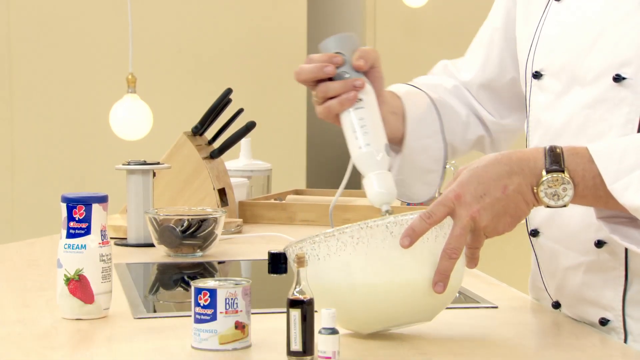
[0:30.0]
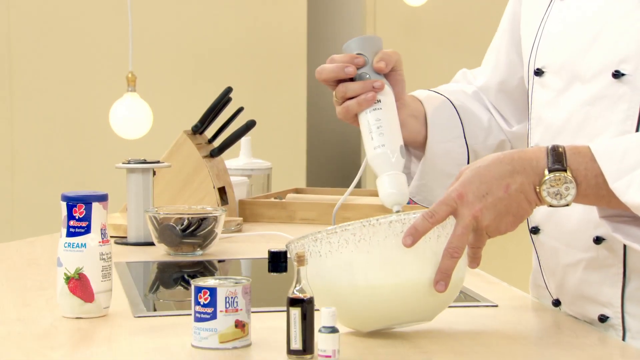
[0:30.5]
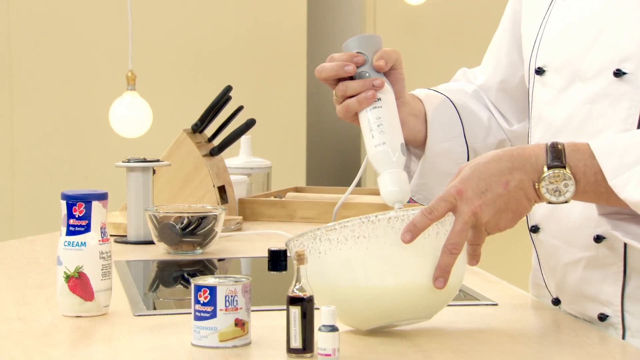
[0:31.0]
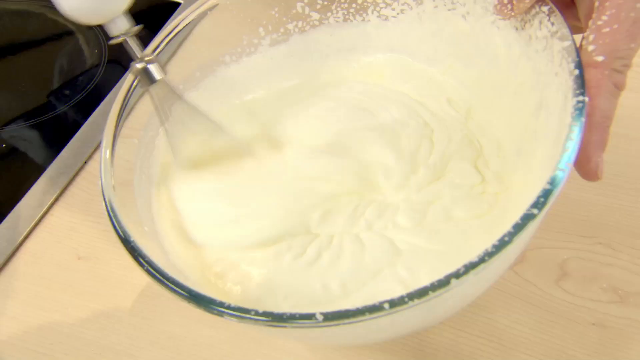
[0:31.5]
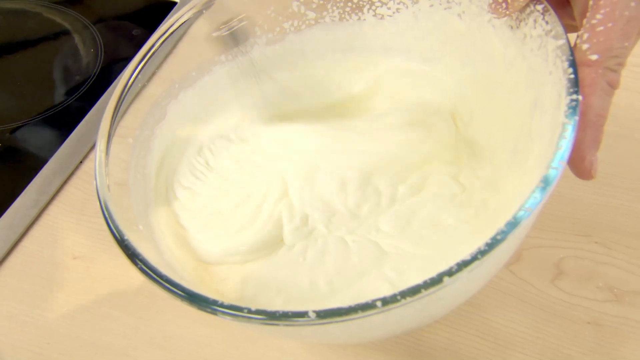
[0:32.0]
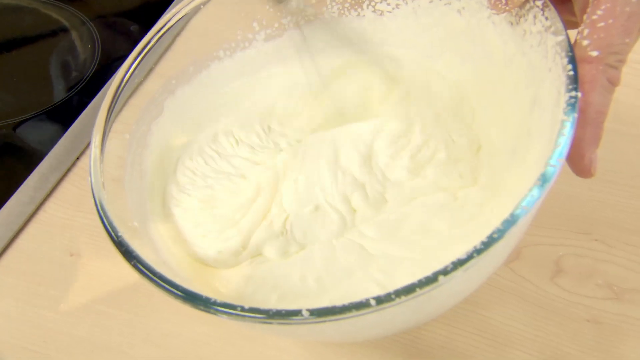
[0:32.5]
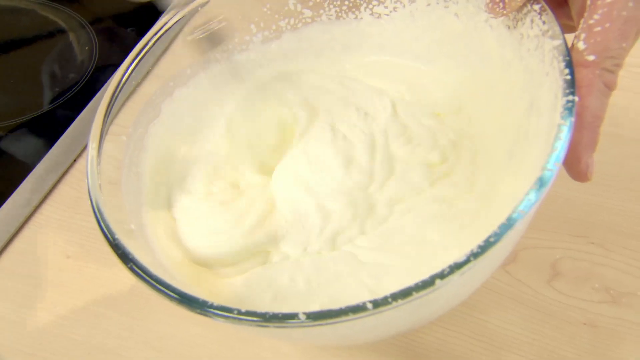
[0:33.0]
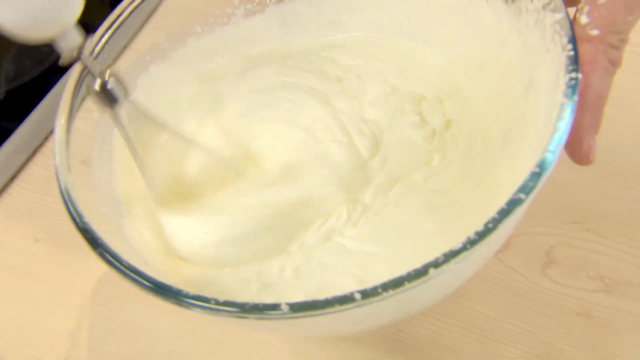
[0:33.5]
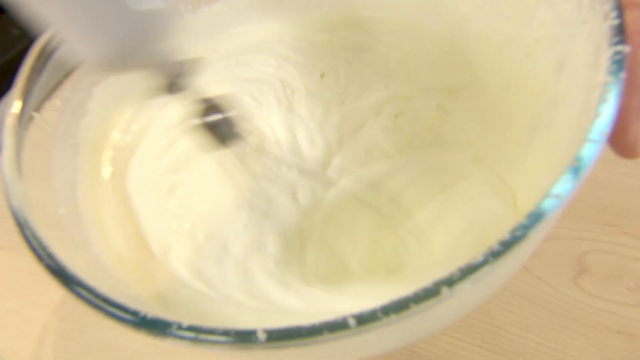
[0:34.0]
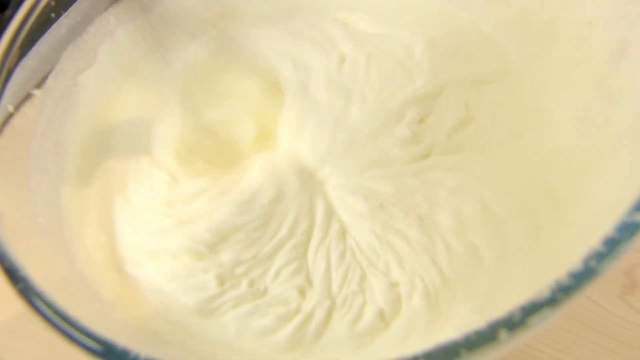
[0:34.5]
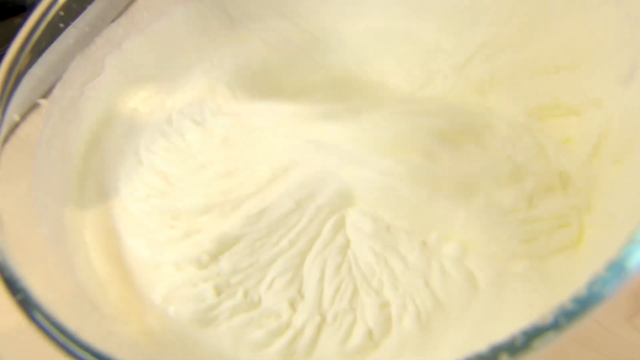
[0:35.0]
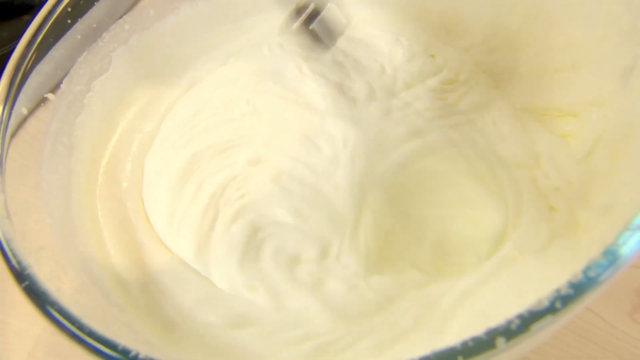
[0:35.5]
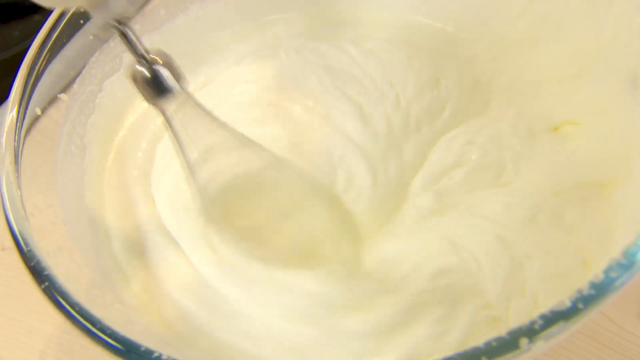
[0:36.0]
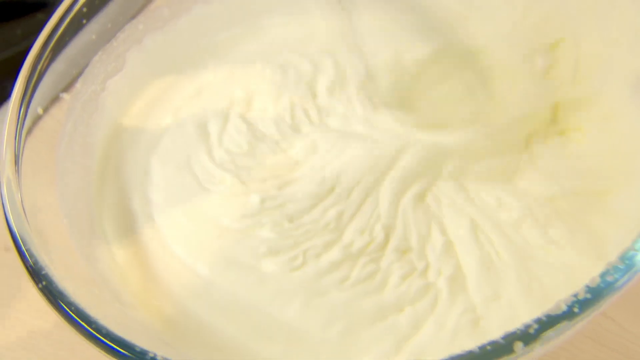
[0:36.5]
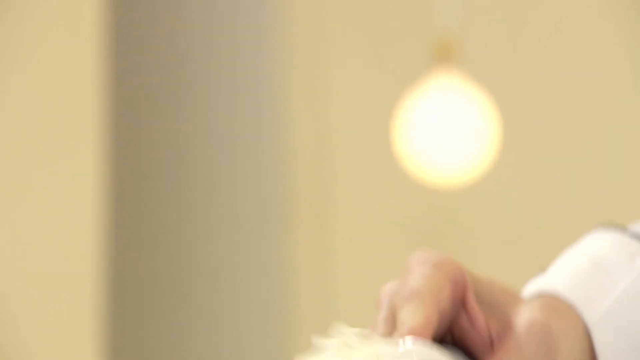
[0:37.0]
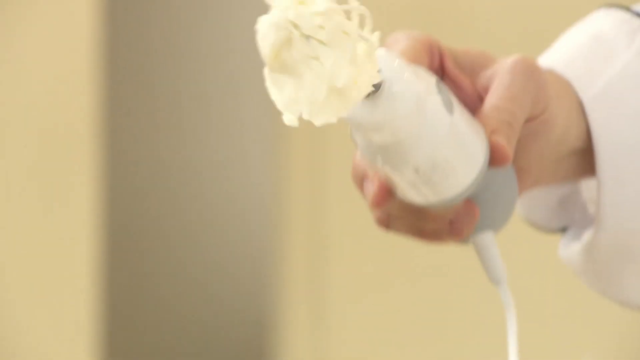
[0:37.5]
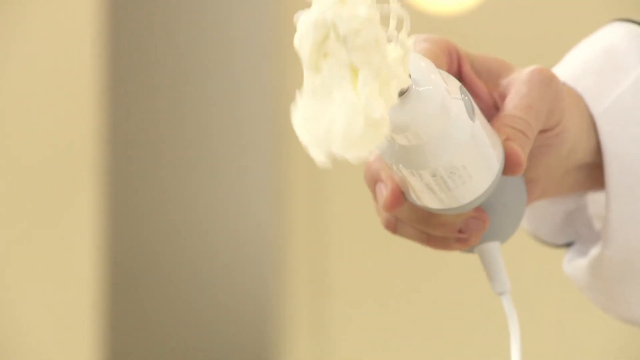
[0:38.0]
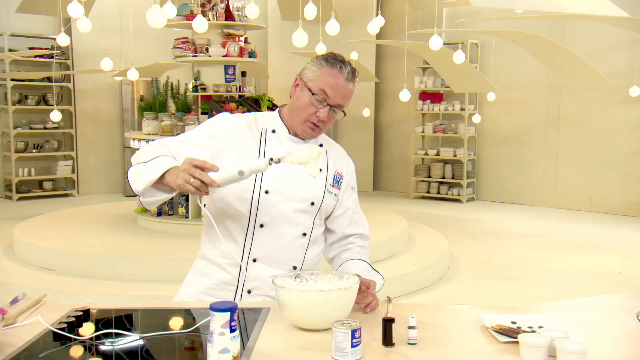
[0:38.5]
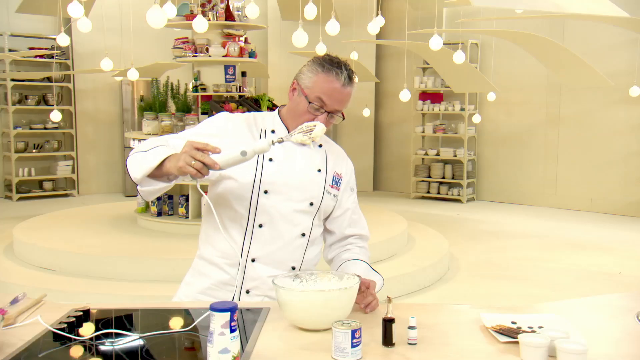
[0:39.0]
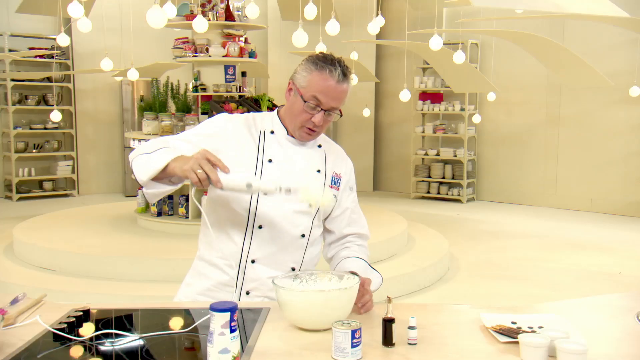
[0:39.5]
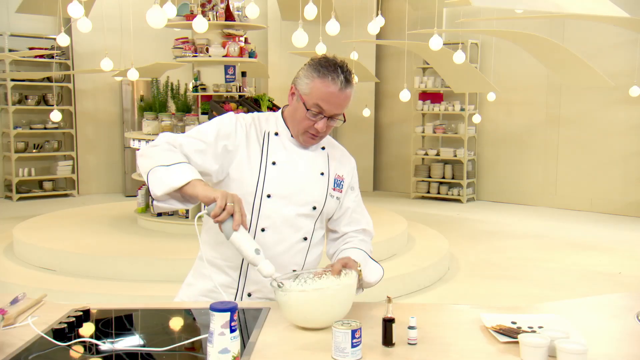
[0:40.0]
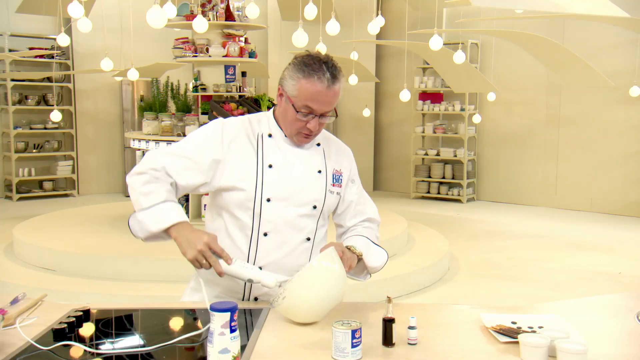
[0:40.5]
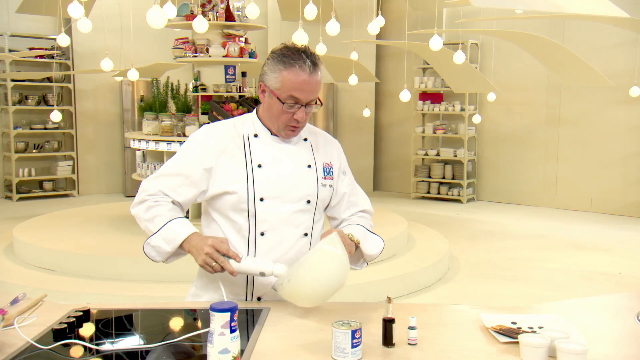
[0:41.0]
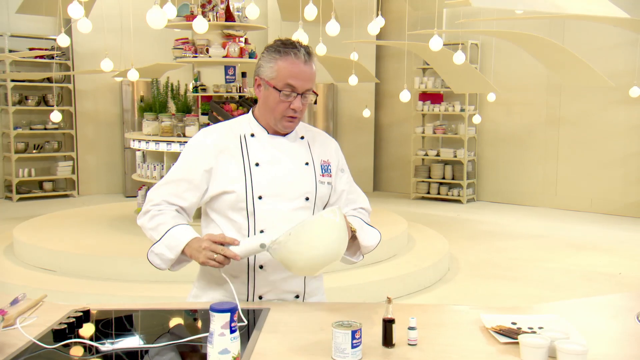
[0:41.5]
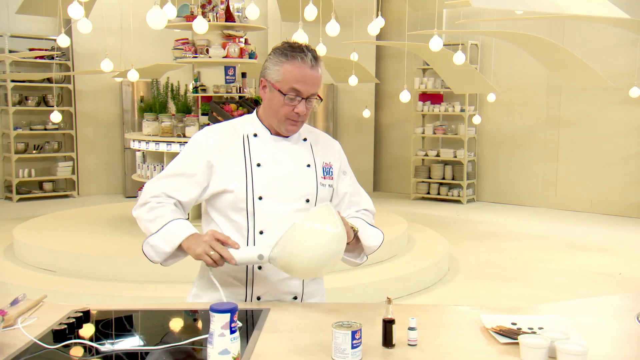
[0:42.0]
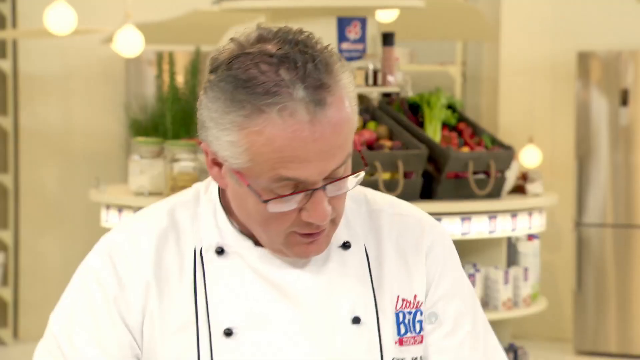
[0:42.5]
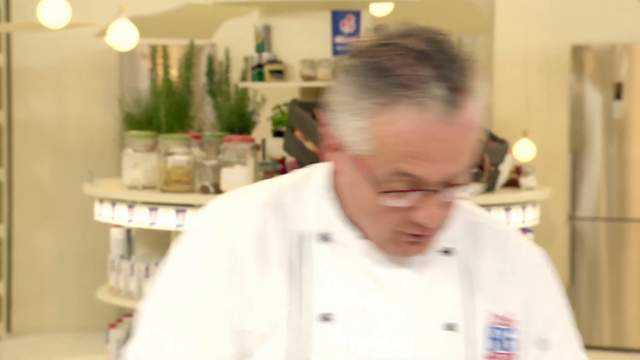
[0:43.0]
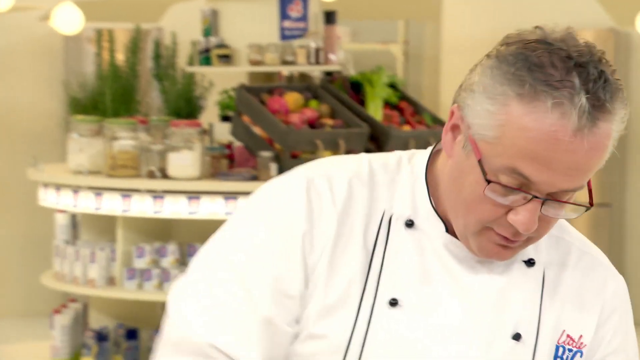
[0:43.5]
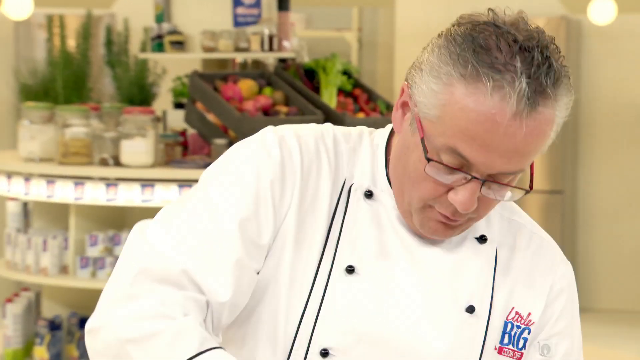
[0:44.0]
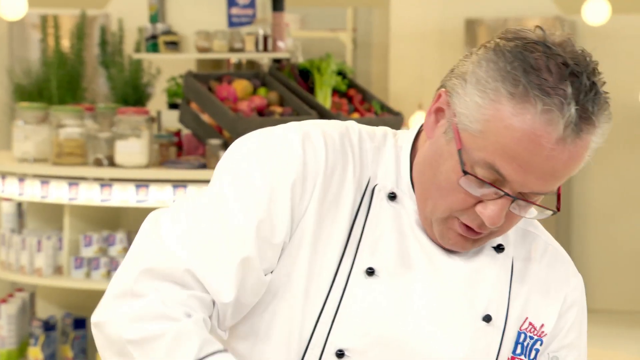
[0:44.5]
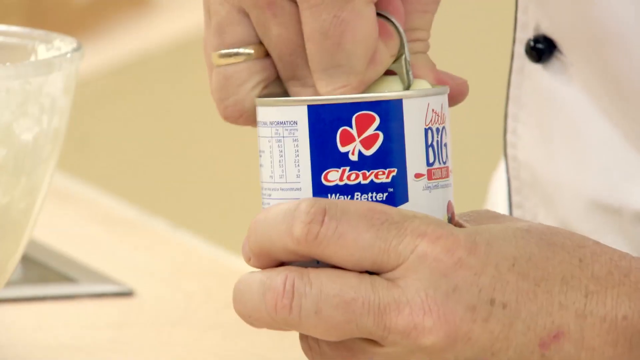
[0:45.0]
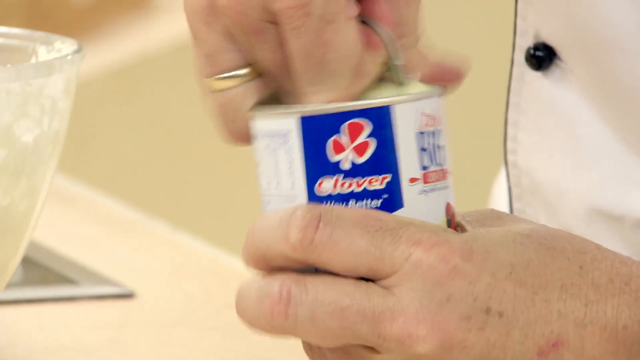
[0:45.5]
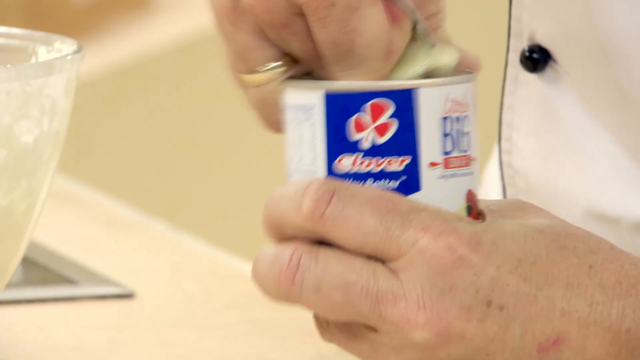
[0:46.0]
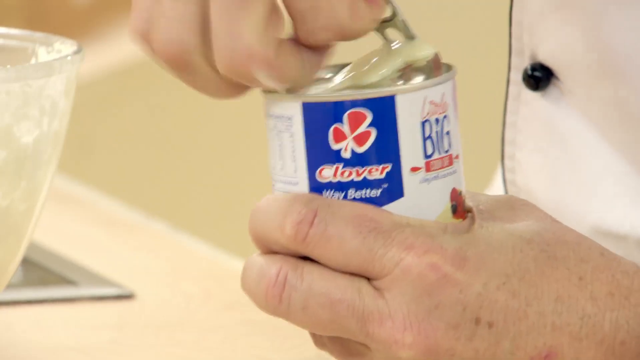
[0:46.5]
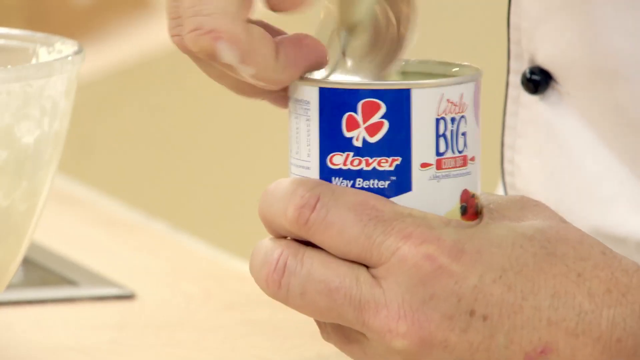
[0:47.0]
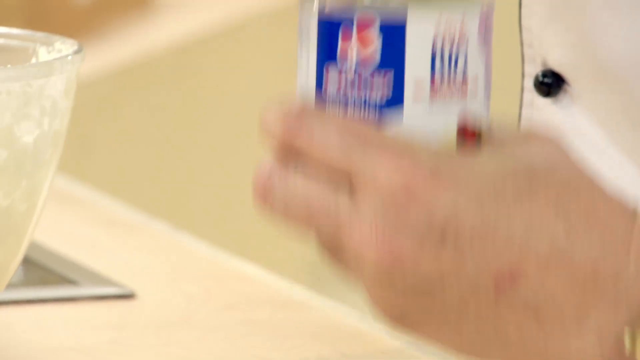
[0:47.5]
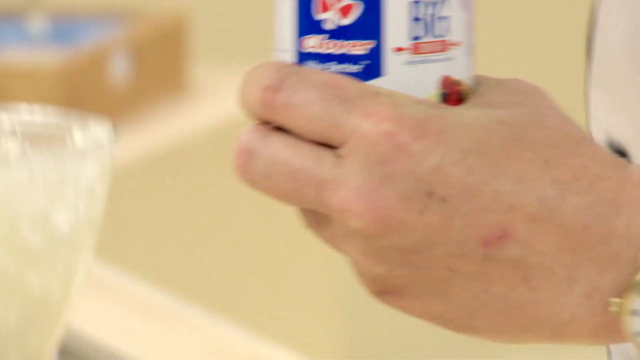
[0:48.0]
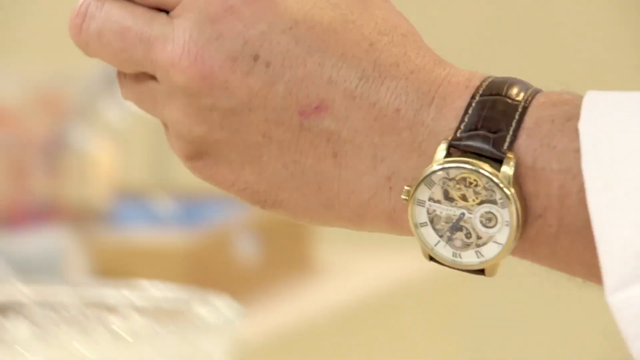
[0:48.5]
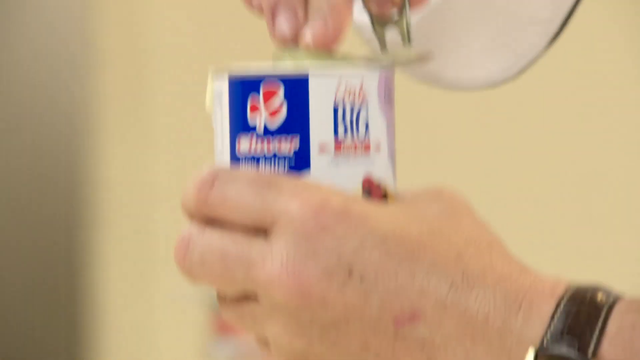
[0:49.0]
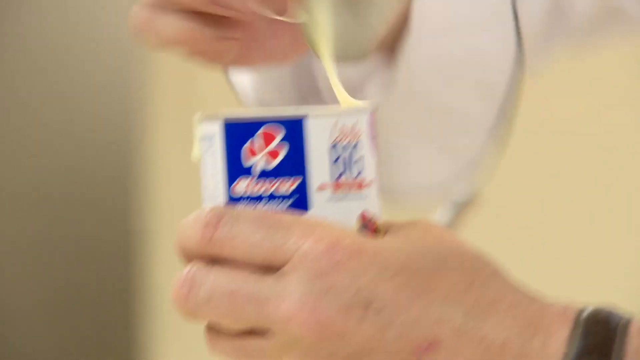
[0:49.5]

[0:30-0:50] On a counter with a knife block and a container of cream, a clear bowl holds what looks like whipped cream, and the chef mixes it with an immersion blender. An overhead view of the bowl shows what appears to be an electric whisk mixing the cream, and the camera zooms in on the cream. A hand lifts the whisk out with cream on it and sort of shakes it. The camera zooms out to the chef, who holds the electric whisk in one hand with his other hand on the clear bowl, looking down. He puts the electric whisk back into the bowl and tilts the bowl slightly. The camera zooms in on the chef from the shoulders up, then in on his hands holding a can of Clover condensed milk. He pulls the tab on top, opens the can, and begins pouring the condensed milk into the bowl of whipped cream.